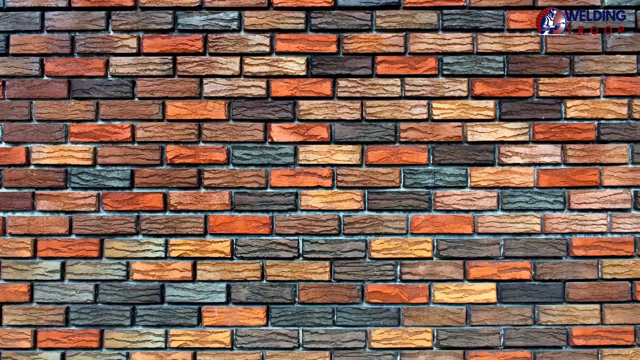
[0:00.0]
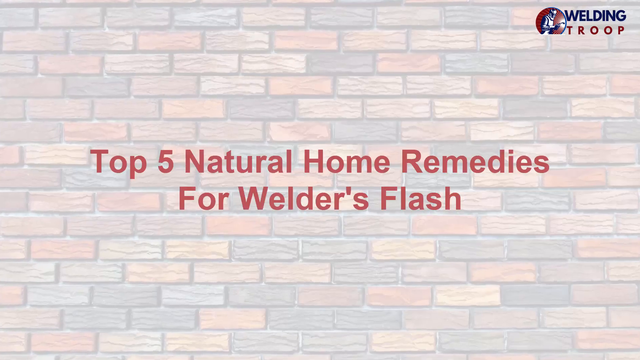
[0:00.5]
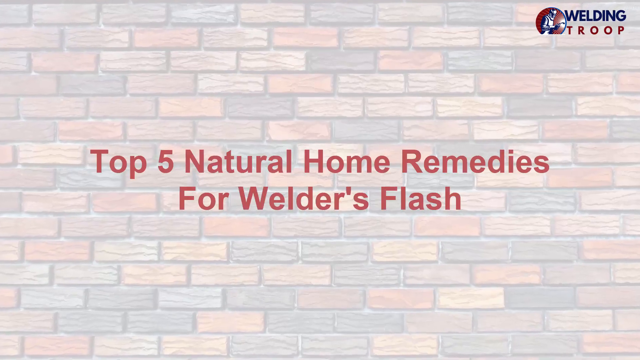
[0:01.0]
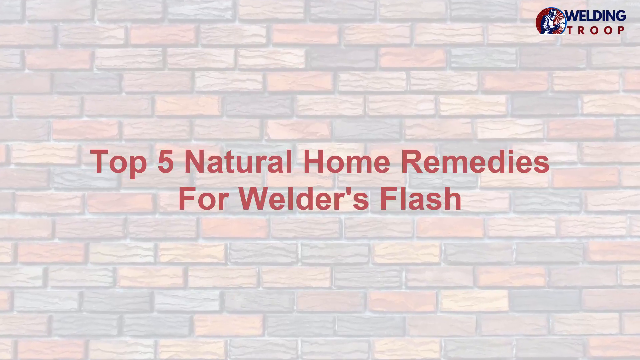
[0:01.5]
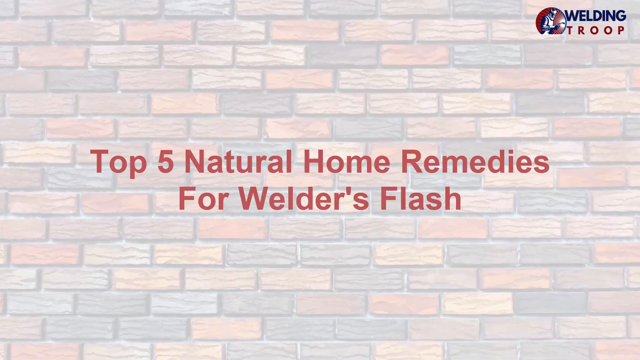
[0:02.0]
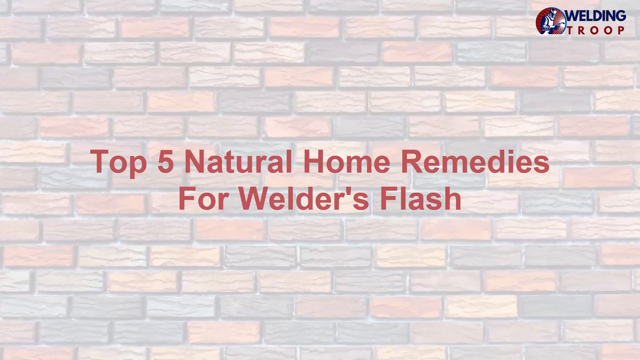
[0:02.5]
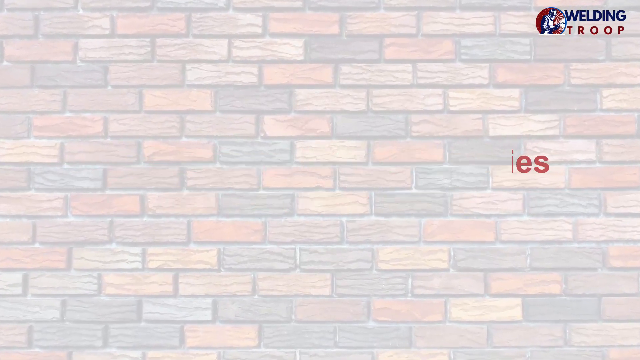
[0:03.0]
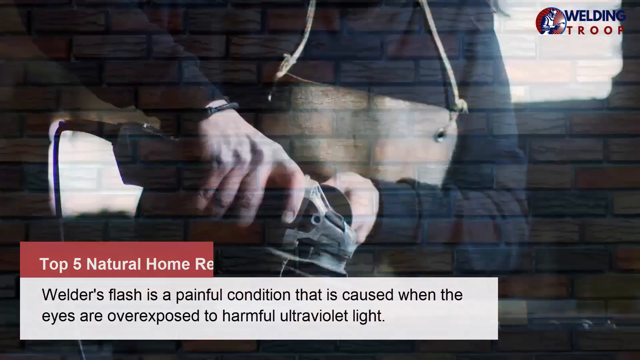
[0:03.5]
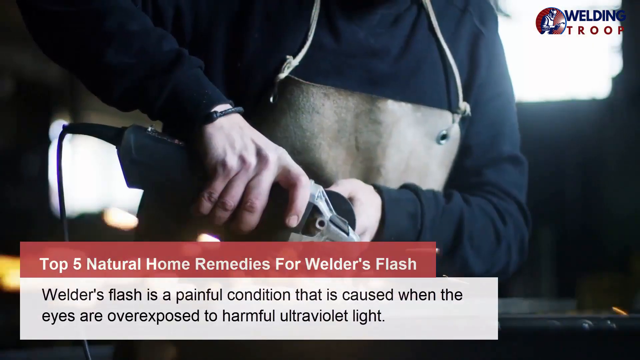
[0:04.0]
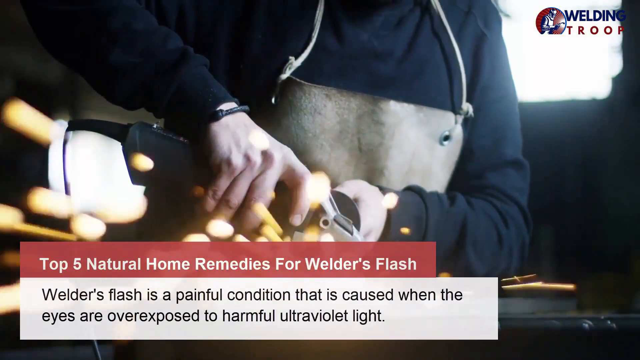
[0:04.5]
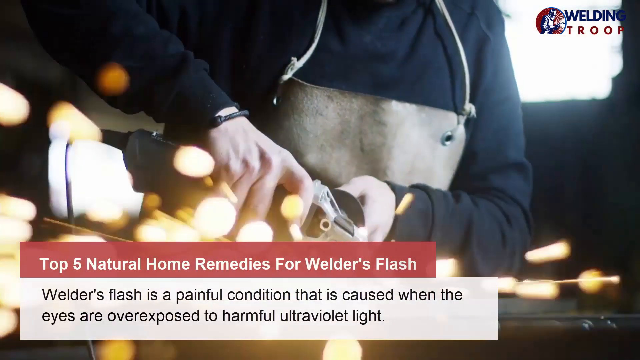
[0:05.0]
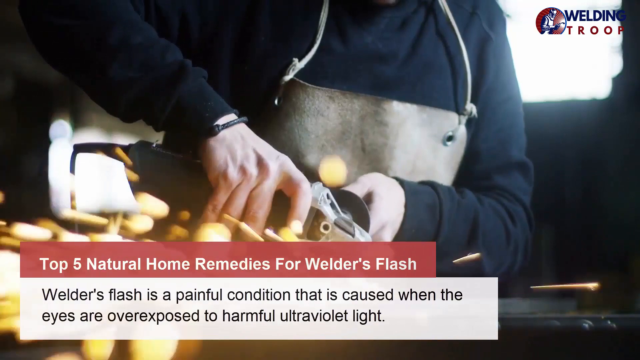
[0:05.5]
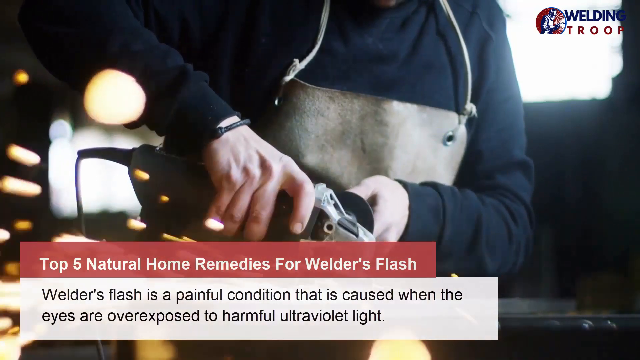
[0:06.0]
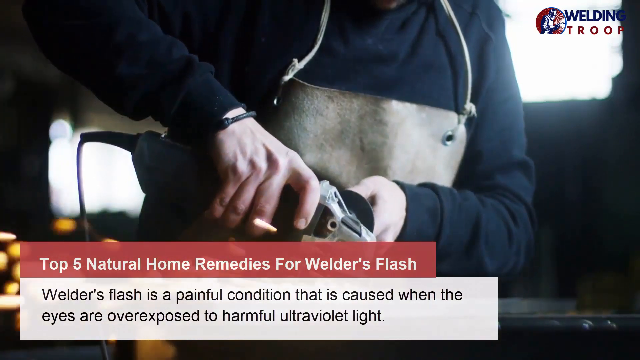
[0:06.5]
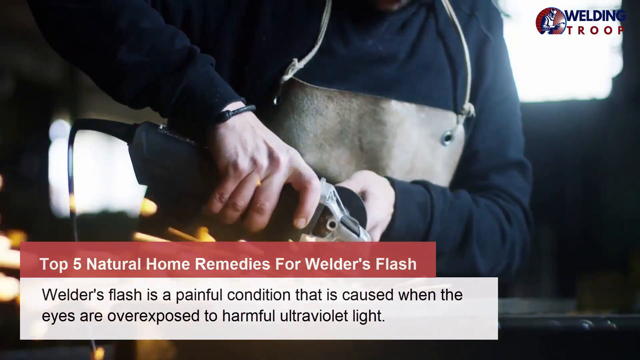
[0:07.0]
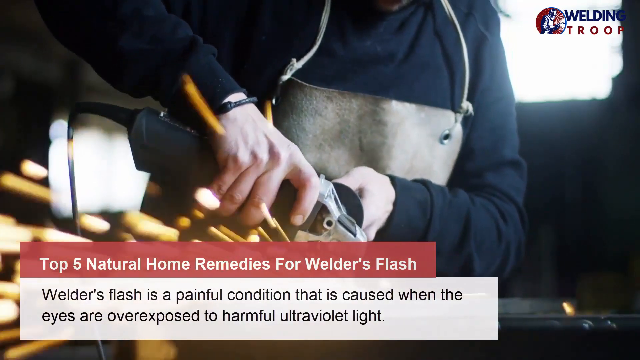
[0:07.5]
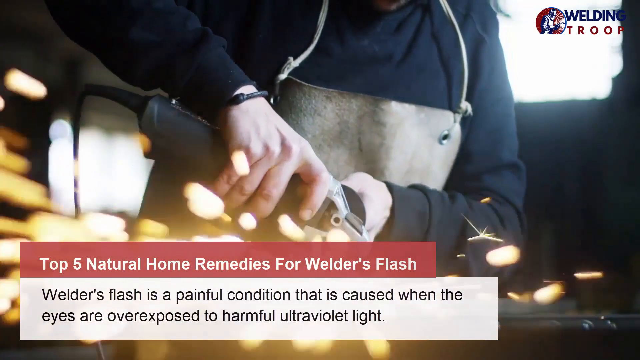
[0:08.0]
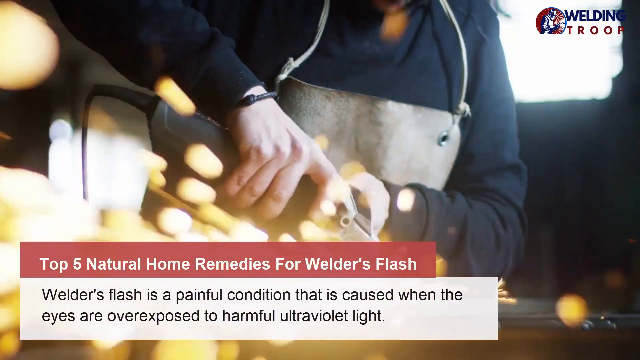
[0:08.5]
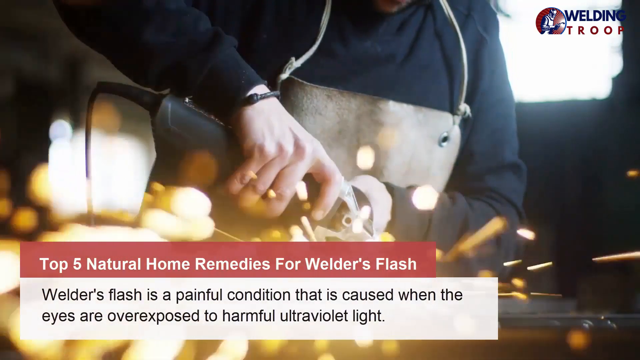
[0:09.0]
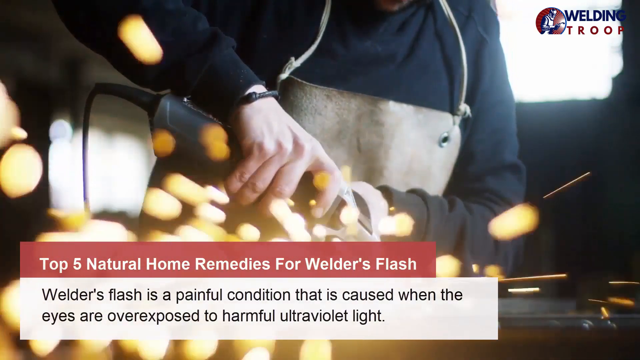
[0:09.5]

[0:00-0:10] The title "Top 5 Natural Home Remedies For Welder's Flash" appears in red words over a brick background. A video of a man welding follows, with "Top 5 Natural Home Remedies For Welder's Flash" at the bottom of the screen and, beneath it, "Welder's flash is a painful condition that is caused when the eyes are overexposed to harmful ultraviolet light." In the top right corner is a picture of a man, apparently welding, with the text "Welding Troop".